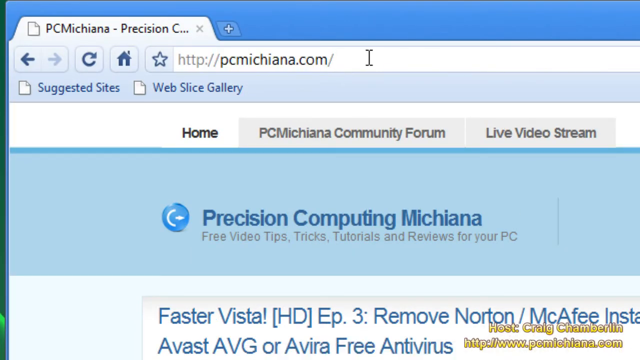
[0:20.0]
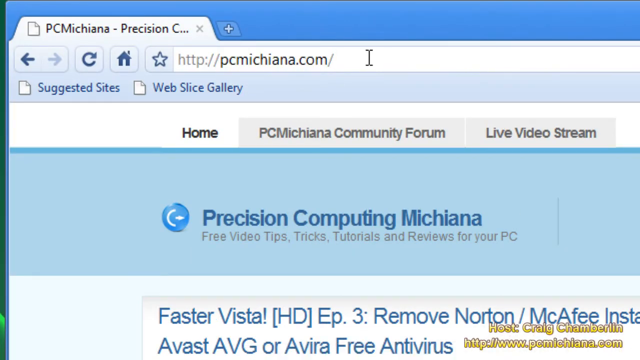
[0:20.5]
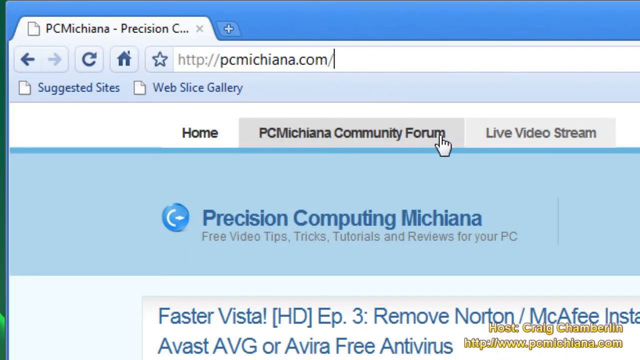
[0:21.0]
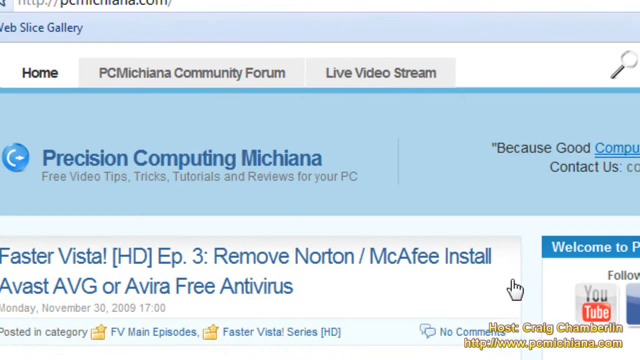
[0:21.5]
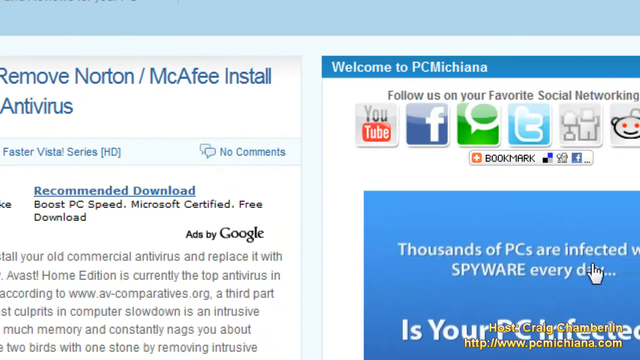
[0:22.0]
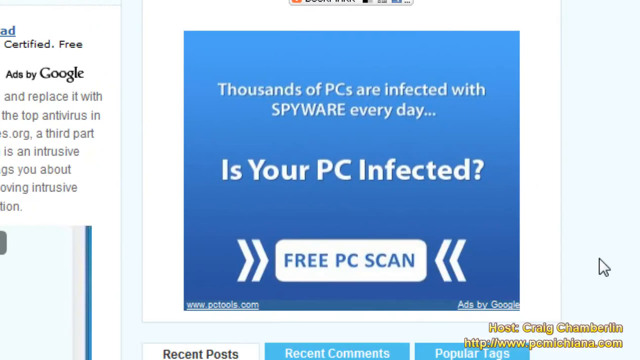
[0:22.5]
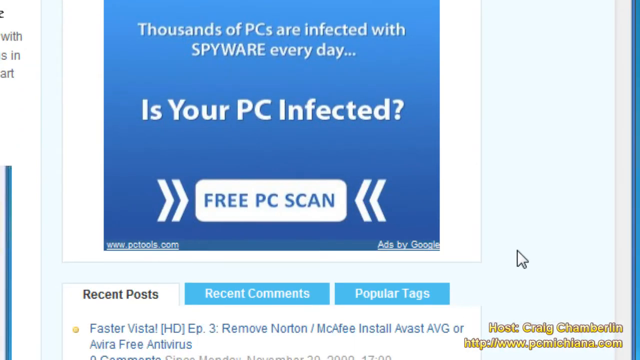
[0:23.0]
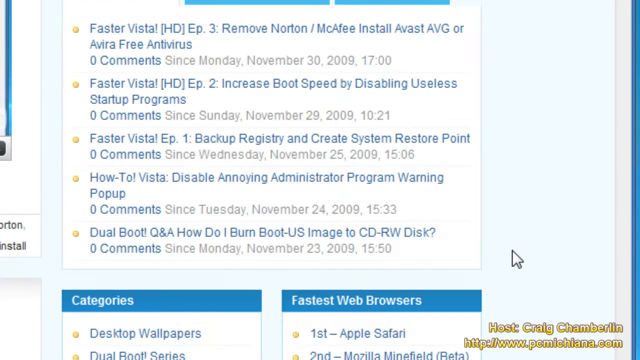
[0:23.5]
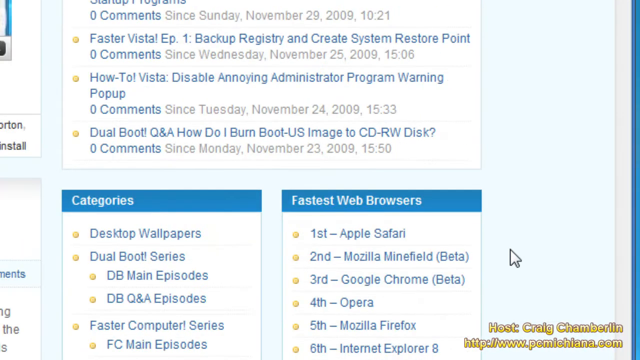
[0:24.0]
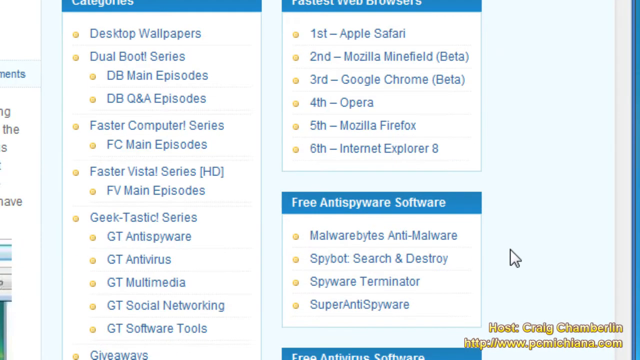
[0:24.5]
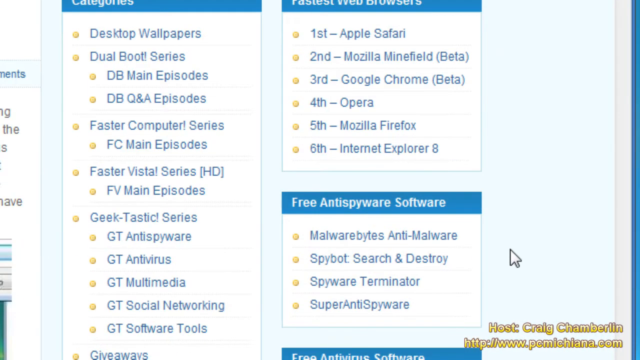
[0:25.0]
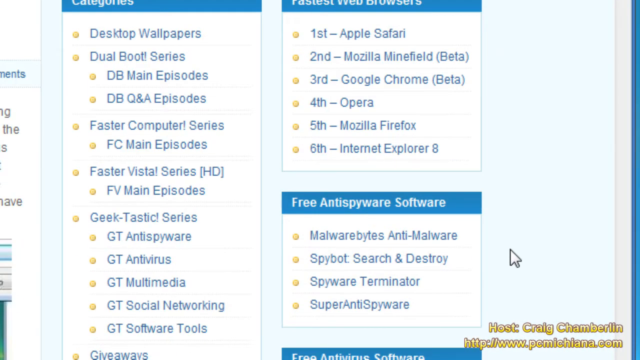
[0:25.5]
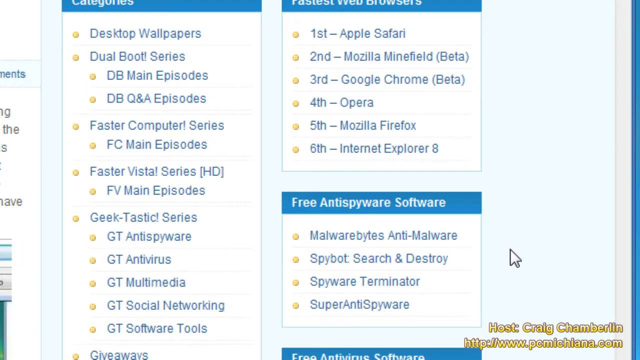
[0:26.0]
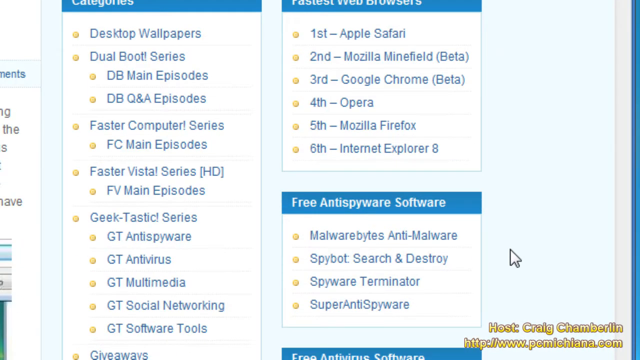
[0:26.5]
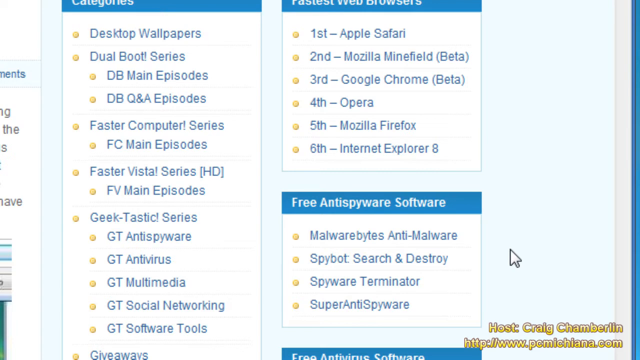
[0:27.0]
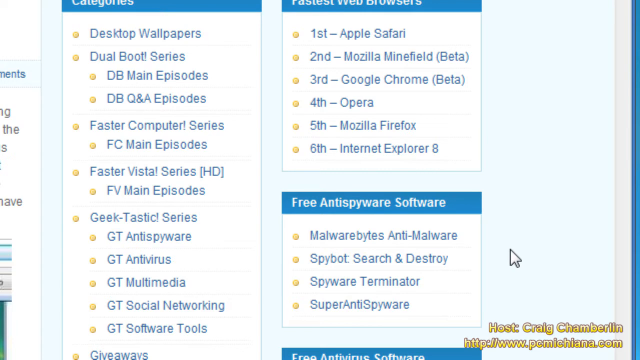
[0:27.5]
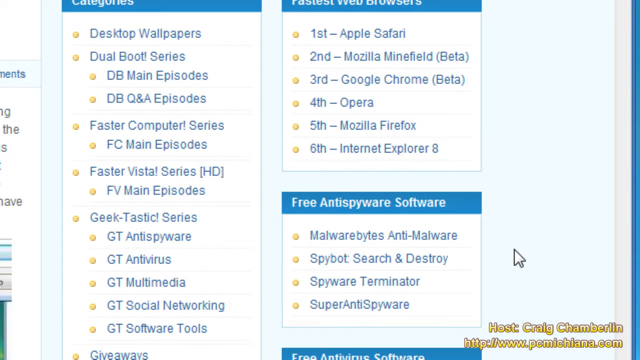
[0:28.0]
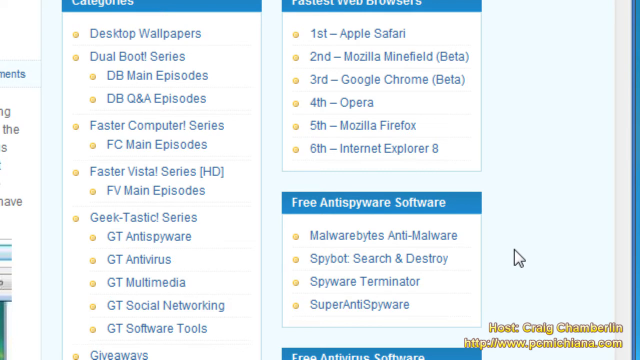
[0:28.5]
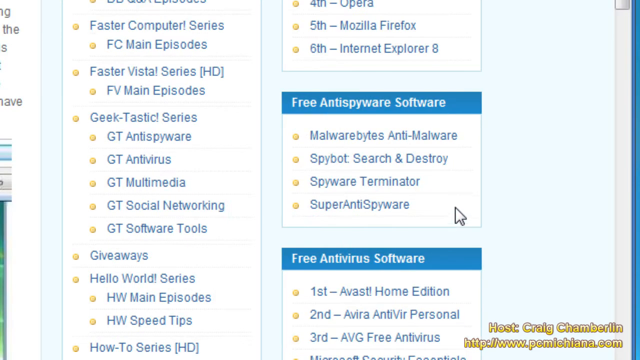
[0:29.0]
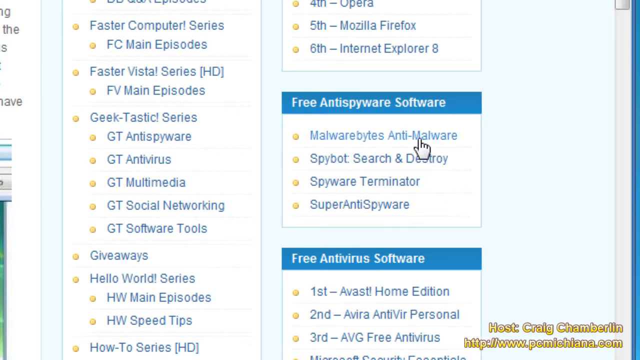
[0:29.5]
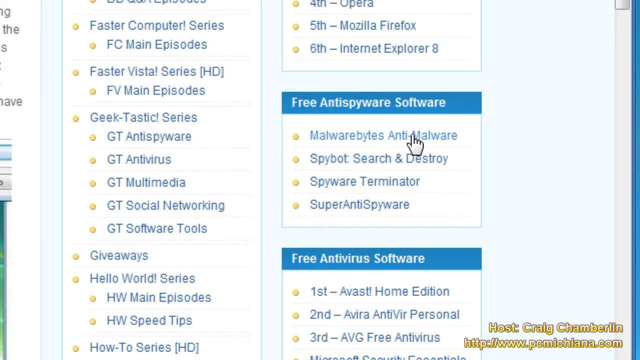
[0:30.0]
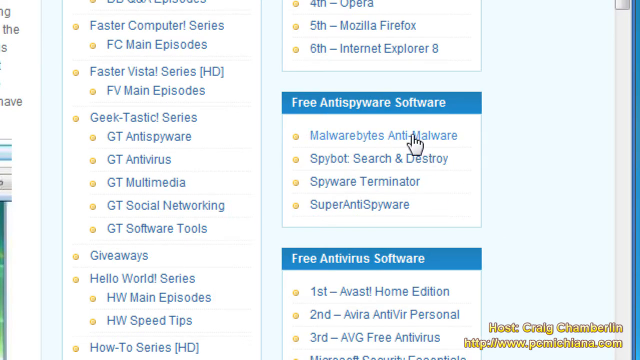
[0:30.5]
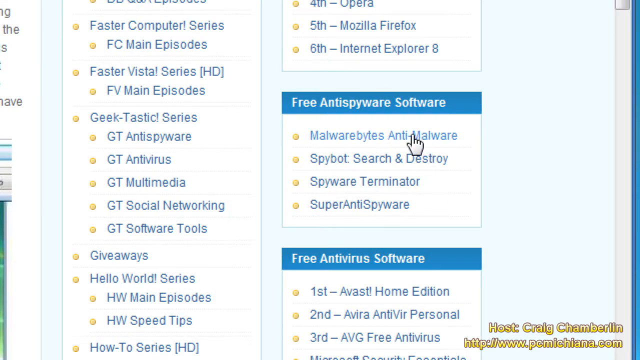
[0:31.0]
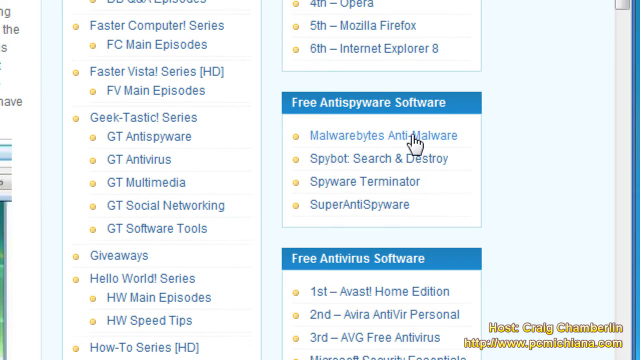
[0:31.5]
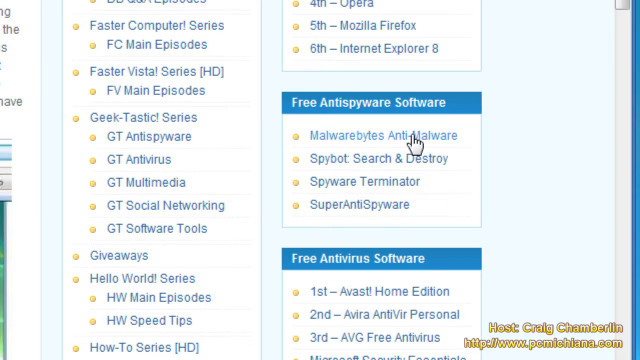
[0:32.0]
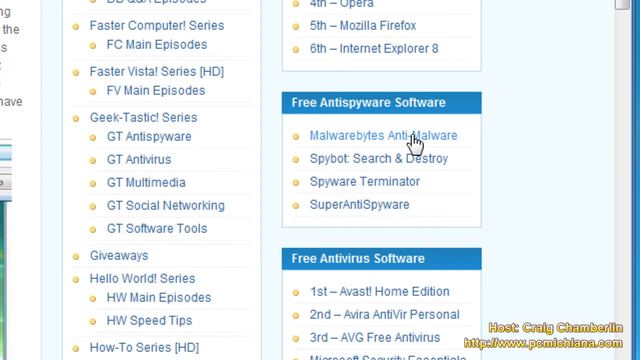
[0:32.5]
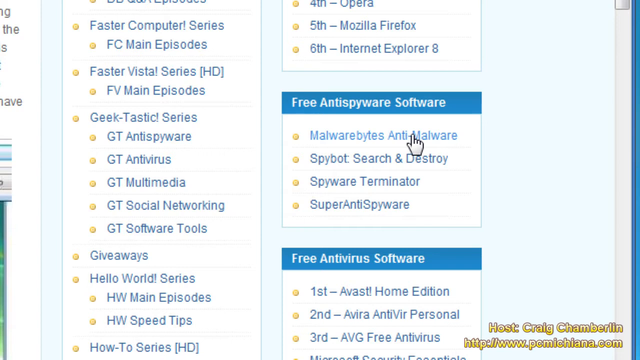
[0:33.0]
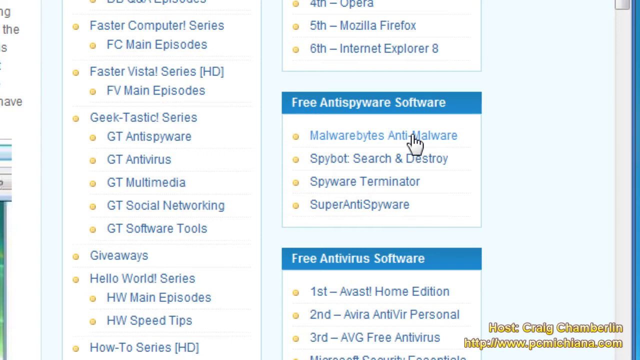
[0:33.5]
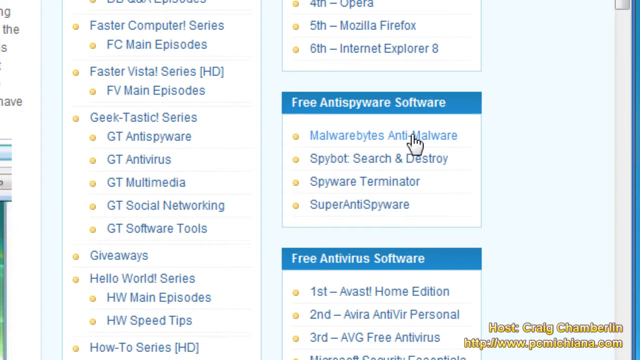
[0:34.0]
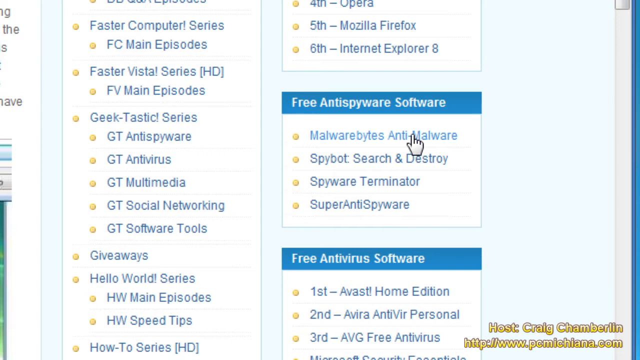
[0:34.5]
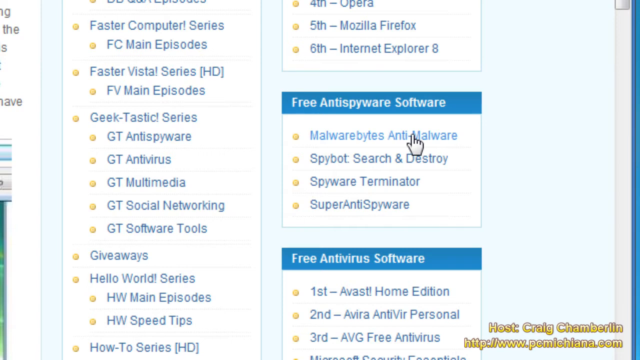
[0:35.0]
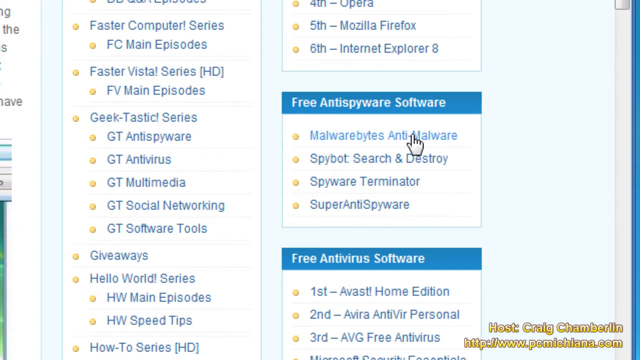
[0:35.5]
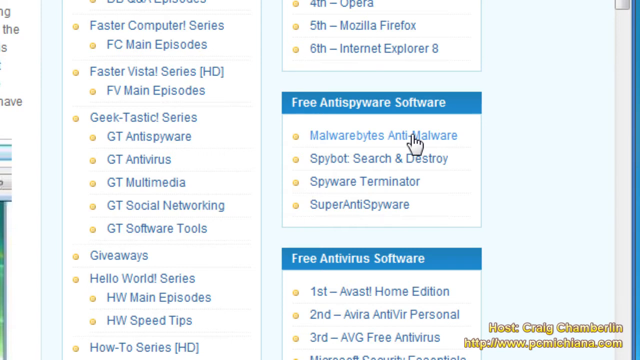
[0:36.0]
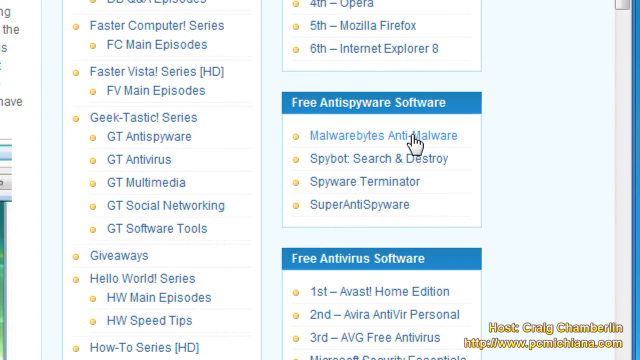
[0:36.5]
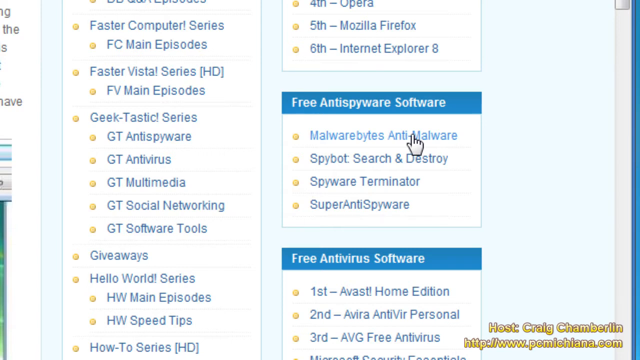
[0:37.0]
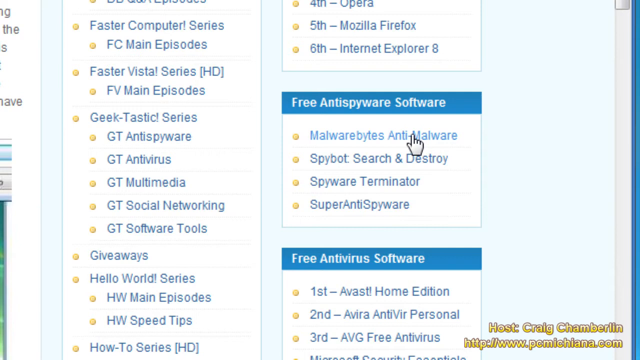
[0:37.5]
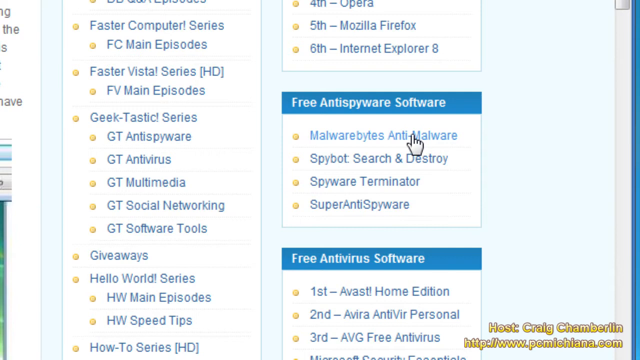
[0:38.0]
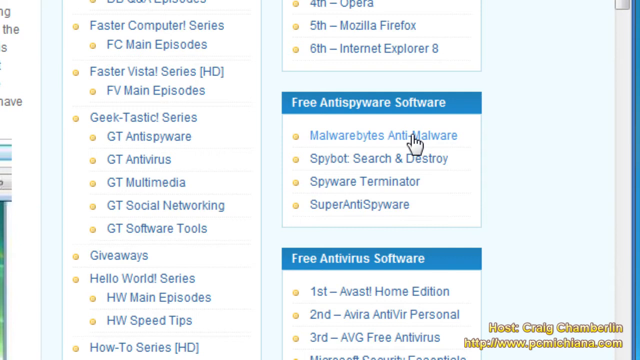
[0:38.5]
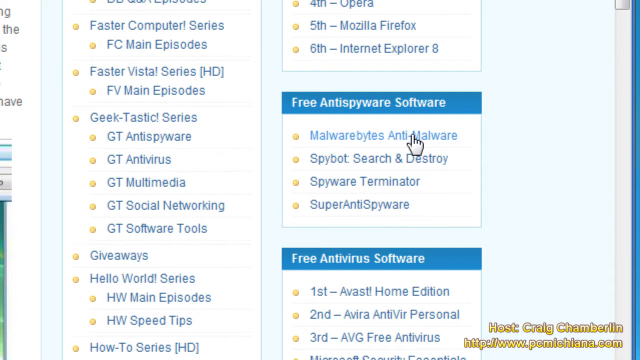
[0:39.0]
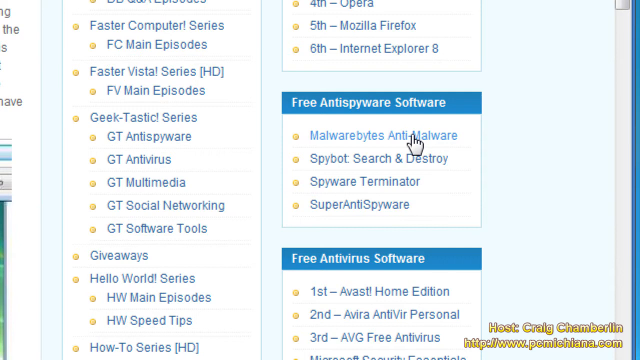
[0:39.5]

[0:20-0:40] The bottom right section of the screen reads "Craig Chamberlain www.michigania.com", and there are various options that can be clicked. The person goes into the free anti-spyware software section and shows that Malwarebytes Anti-Malware is the one they want to click on. Other entries listed include Spybot Search and Destroy, Spyware Terminator and Super Anti-Spyware. Buttons allow choosing different sections, and areas that can be scrolled to include faster computer series, geek tasks and giveaways, with a main episodes option as well.